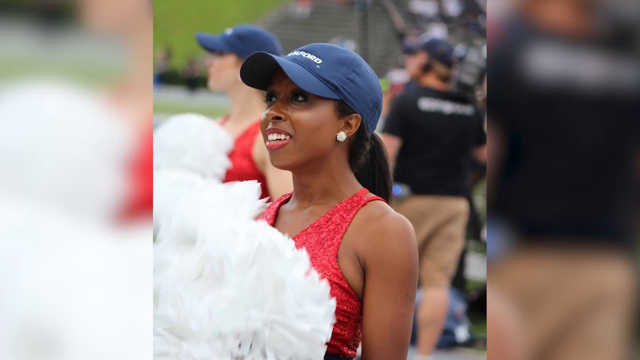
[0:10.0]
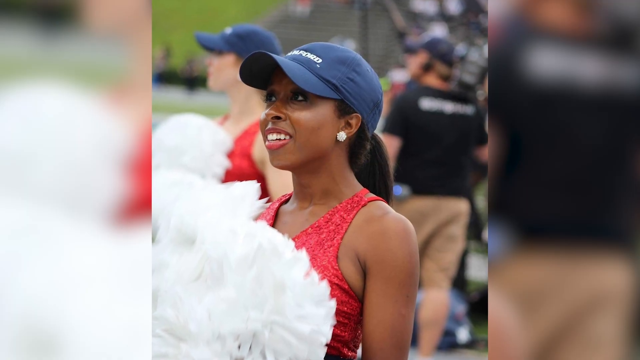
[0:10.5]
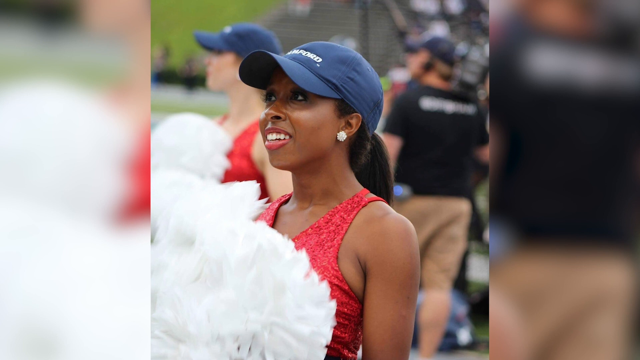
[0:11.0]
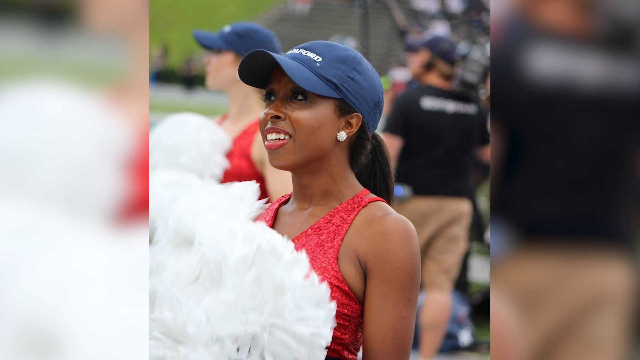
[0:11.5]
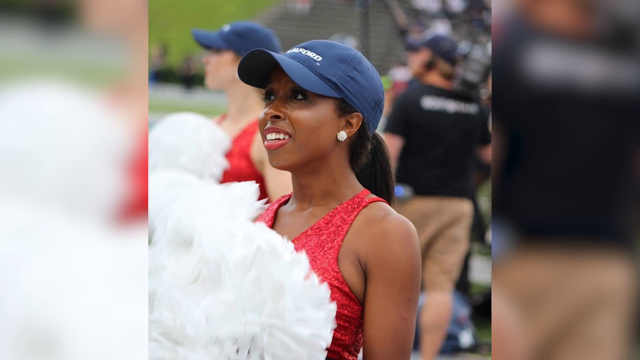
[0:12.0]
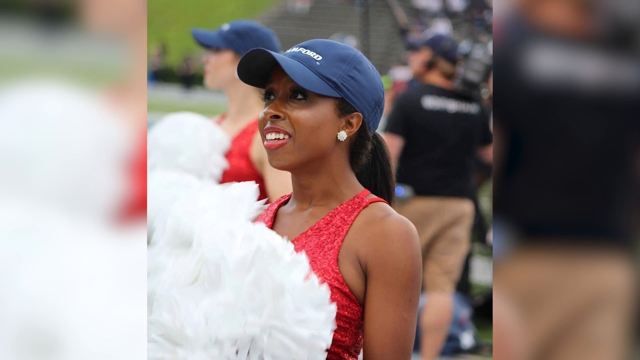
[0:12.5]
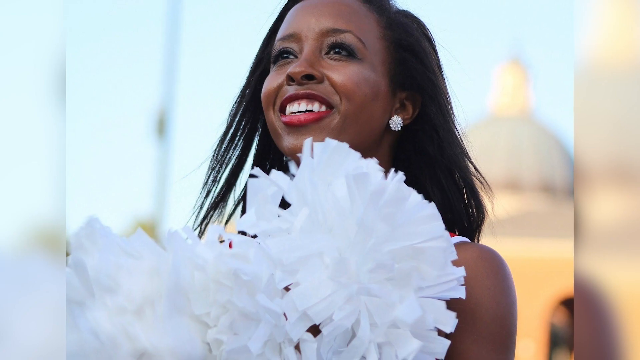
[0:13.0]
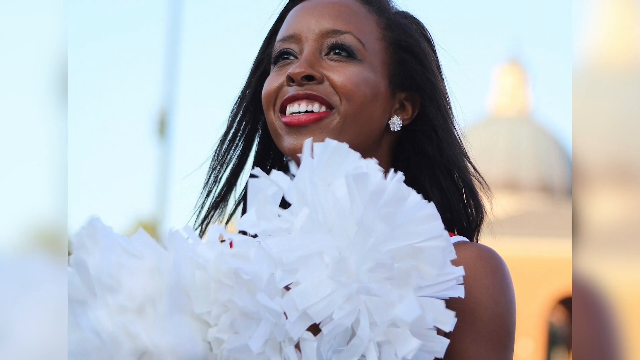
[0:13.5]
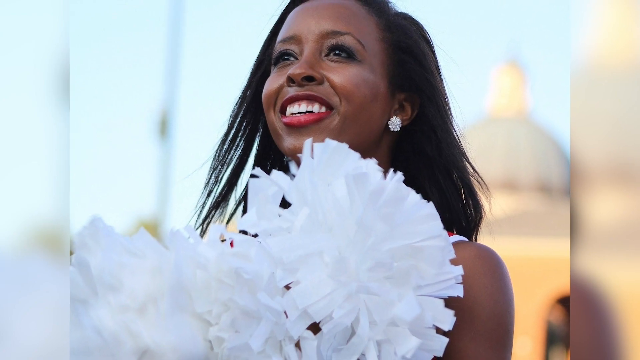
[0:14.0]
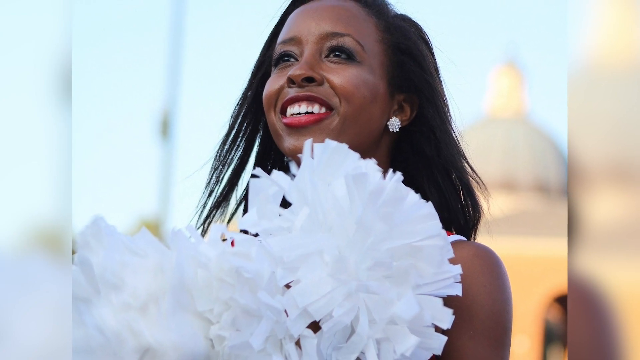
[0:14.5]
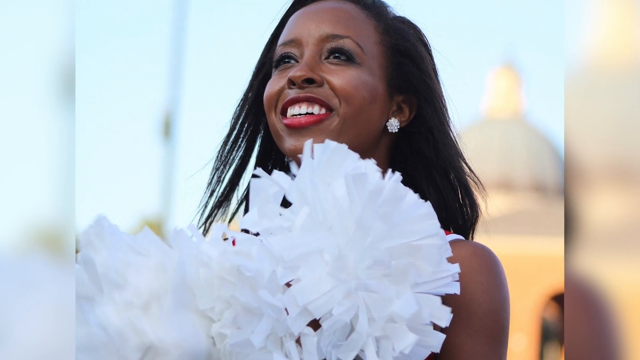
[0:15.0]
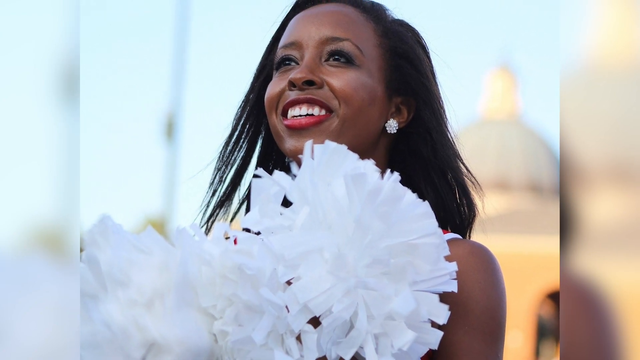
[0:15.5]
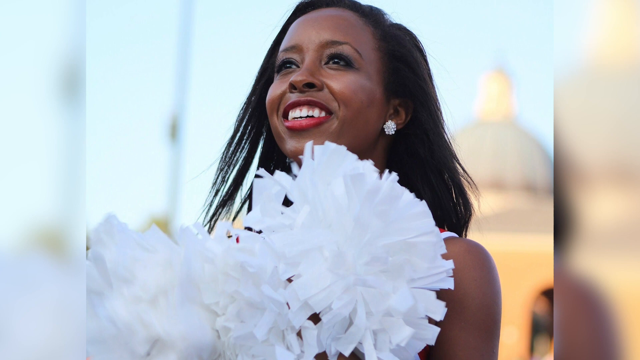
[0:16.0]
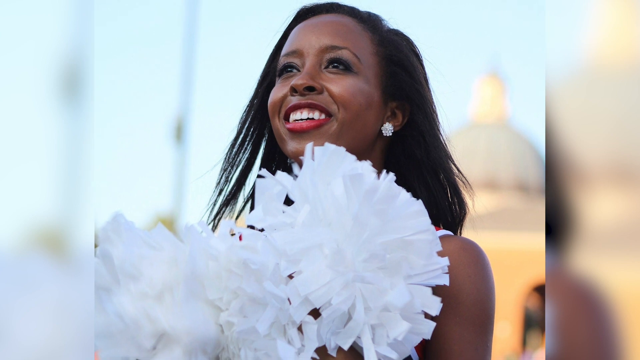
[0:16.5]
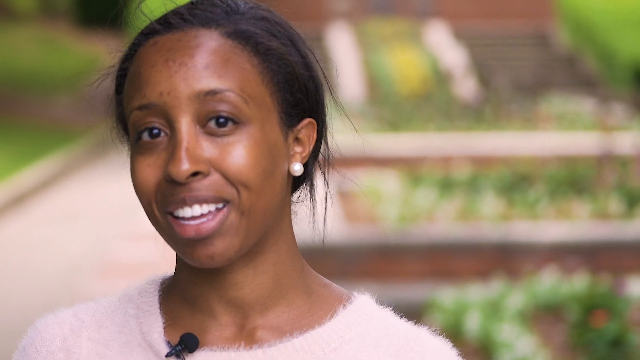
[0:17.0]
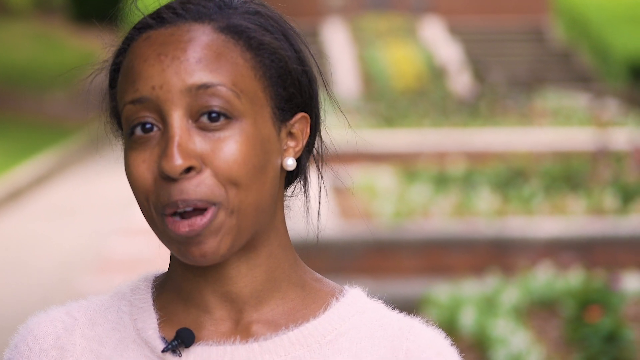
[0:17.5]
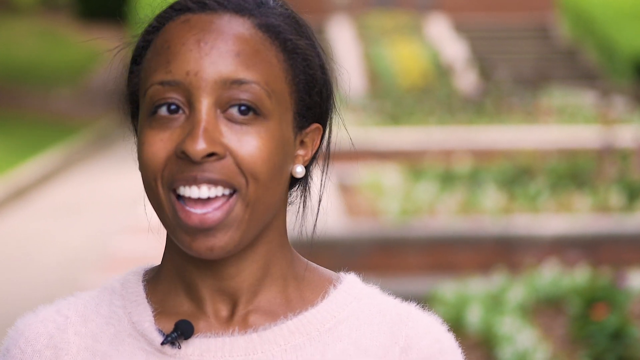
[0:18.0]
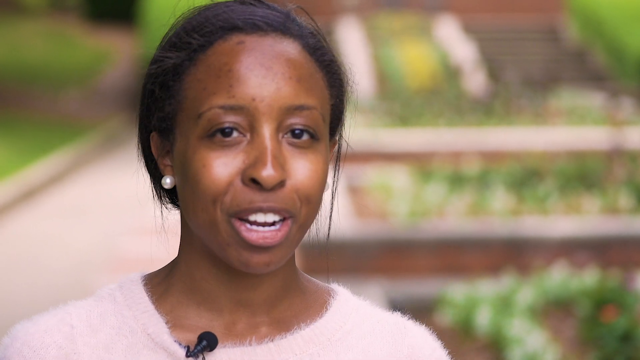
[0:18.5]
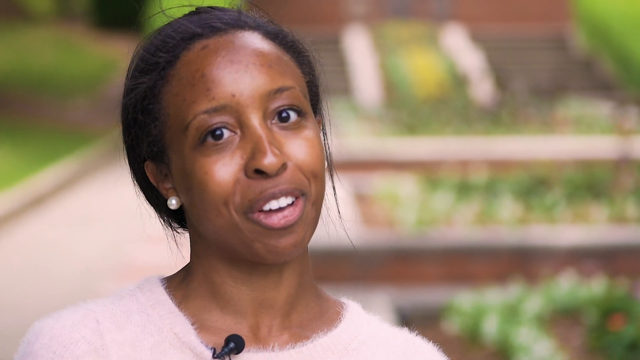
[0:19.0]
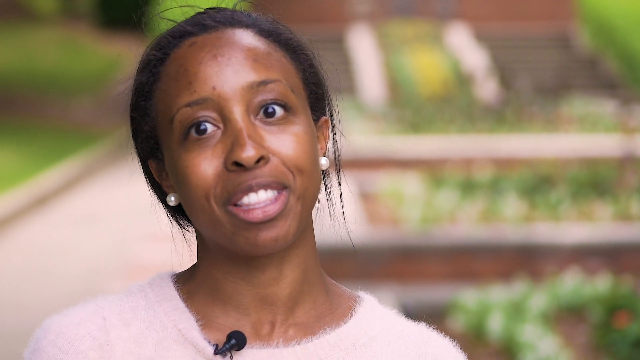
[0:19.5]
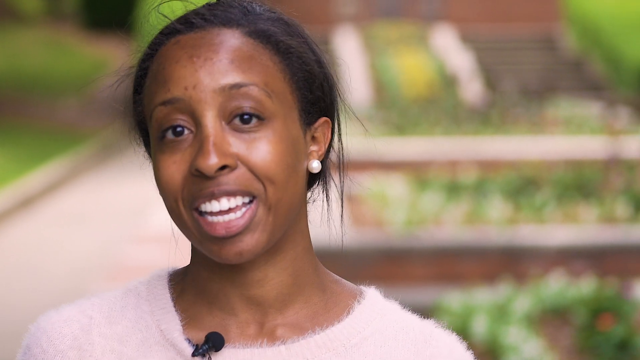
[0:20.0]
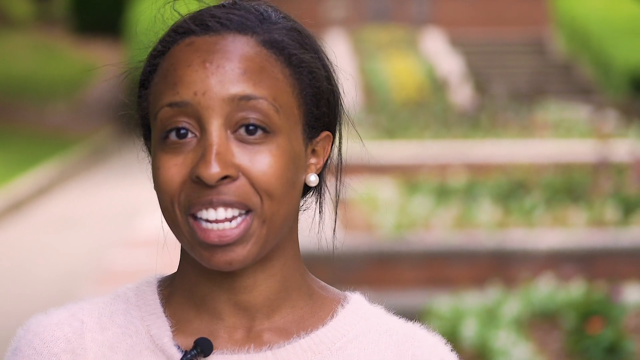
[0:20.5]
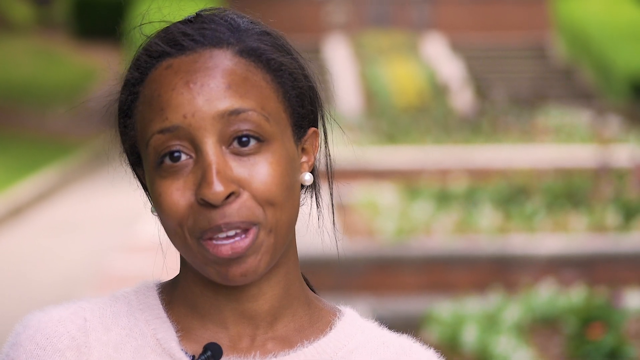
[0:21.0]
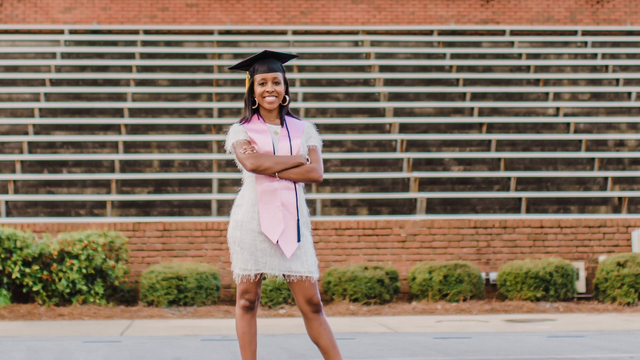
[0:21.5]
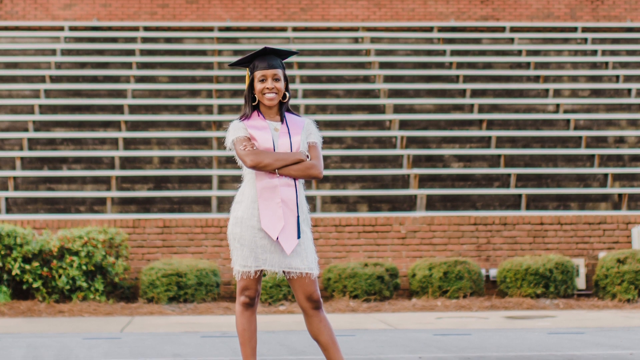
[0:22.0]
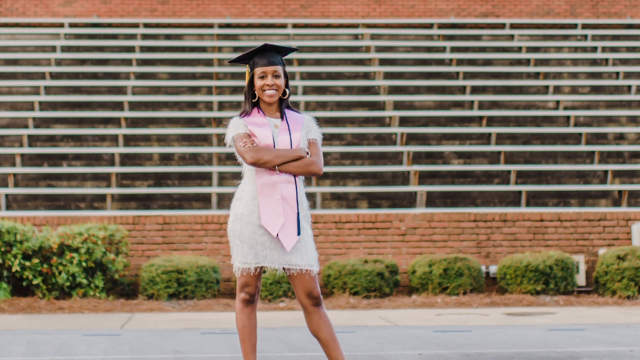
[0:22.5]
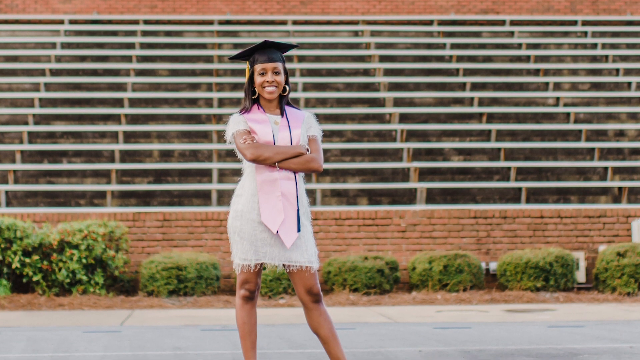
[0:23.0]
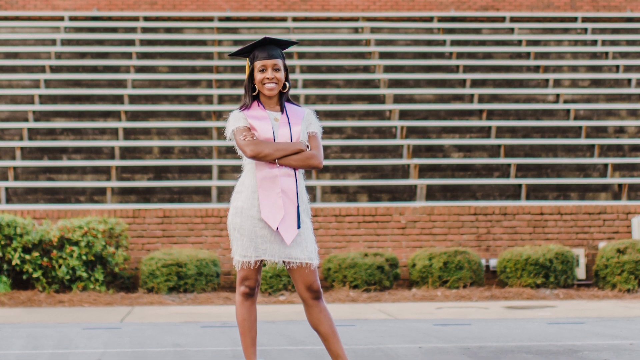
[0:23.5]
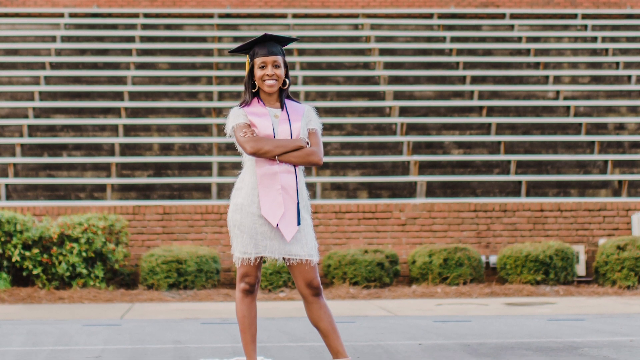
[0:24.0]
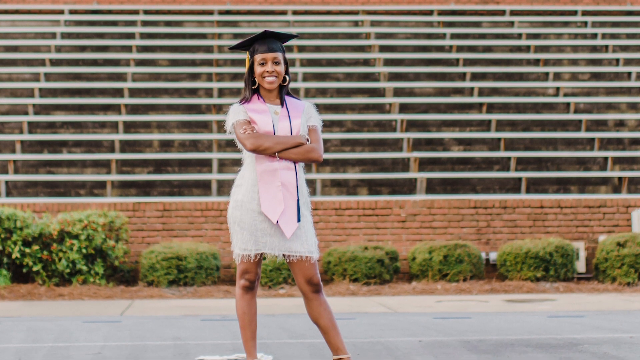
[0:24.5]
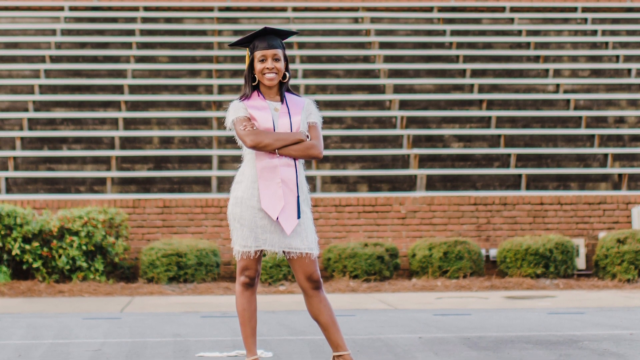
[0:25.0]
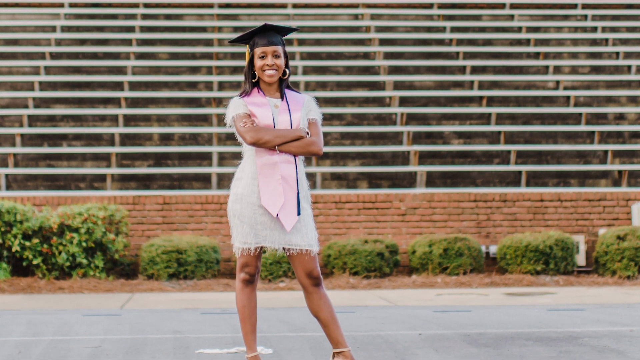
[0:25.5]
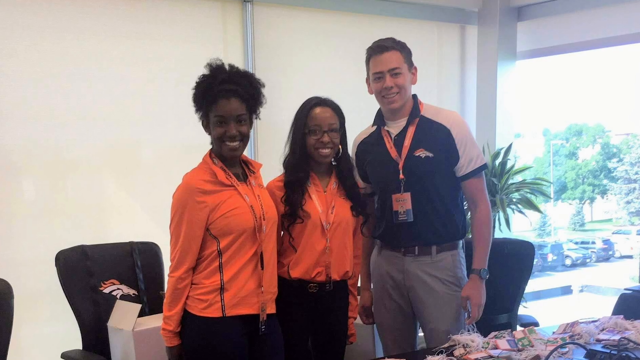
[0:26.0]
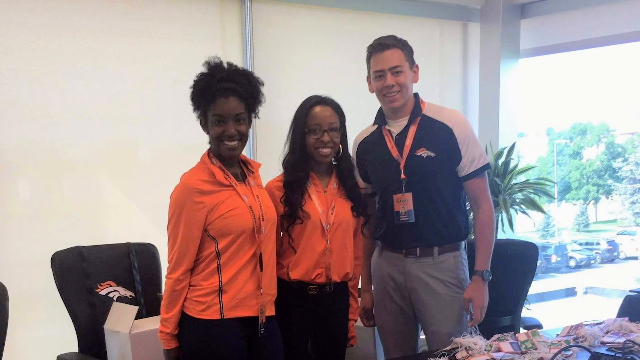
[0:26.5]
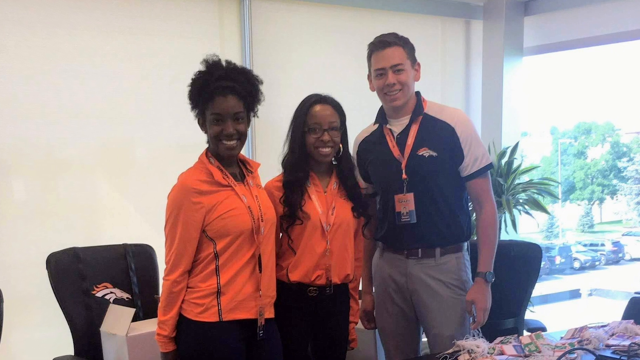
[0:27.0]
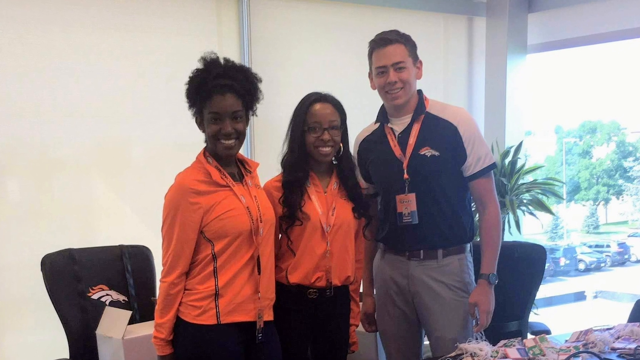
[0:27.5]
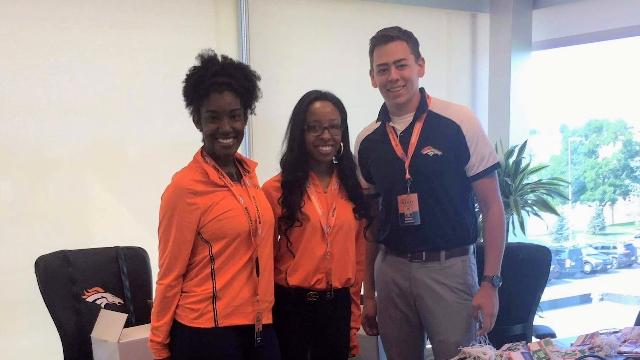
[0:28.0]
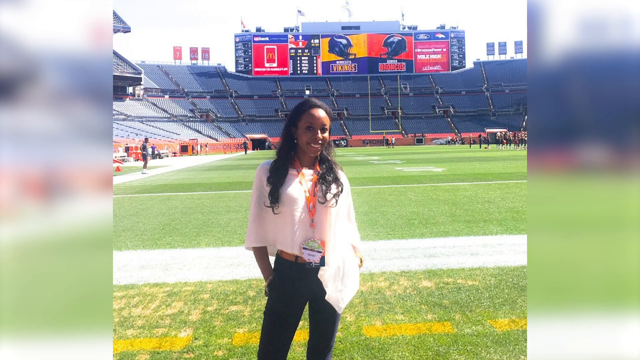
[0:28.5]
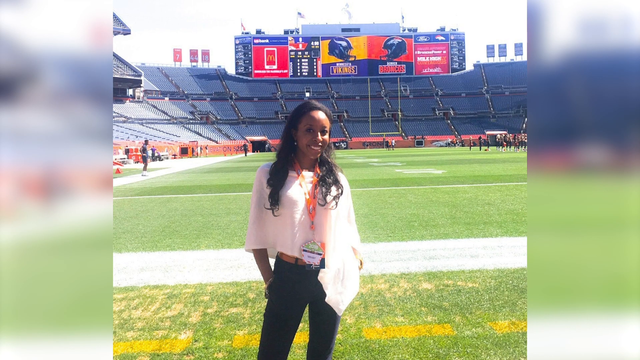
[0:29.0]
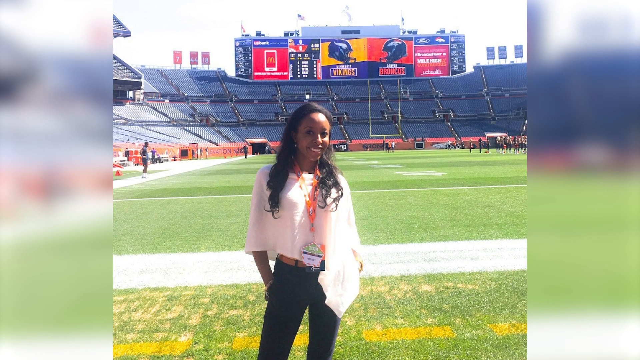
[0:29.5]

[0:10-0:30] Several photographs show the same woman, who has dark skin and dark hair. The first shows her in a red tank top and a blue baseball cap with her hair pulled back; she might be doing cheerleading. She holds pom-poms and is sort of looking to the left. Another photo shows her with her hair down, still holding the pom-poms and smiling. Video footage follows of the same woman with her hair pulled back, wearing a pink sweater and large pearl earrings, talking right to the camera and smiling. Next comes a photograph of her standing confidently in an outdoor setting in a gray dress with a pink sash and a graduation cap, arms crossed, looking right at the camera and smiling; it might be a graduation photo. One more photo shows her in sort of an orange polo, standing with two other people, a man on her right and a woman on her left. She has her hair down and wears glasses, and it looks like a more professional shot of her working, maybe after graduation. She appears very happy.